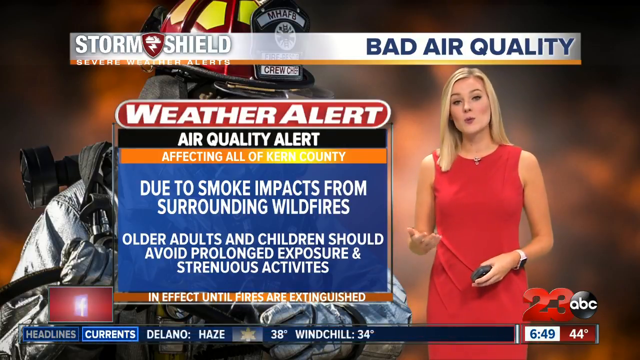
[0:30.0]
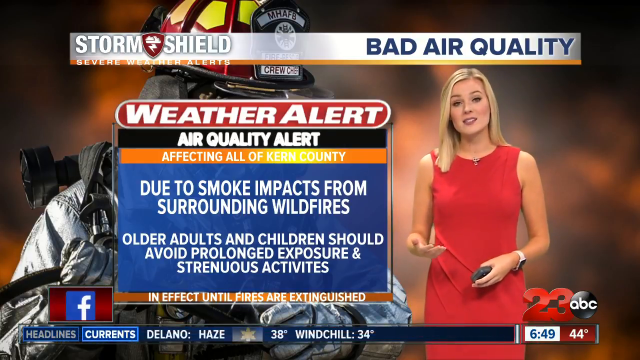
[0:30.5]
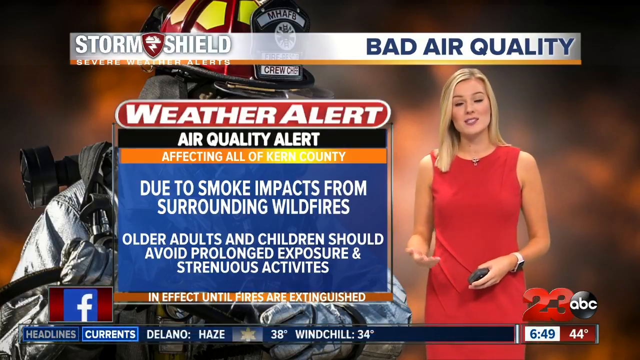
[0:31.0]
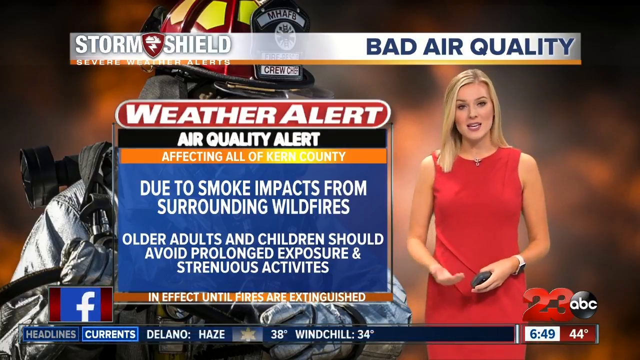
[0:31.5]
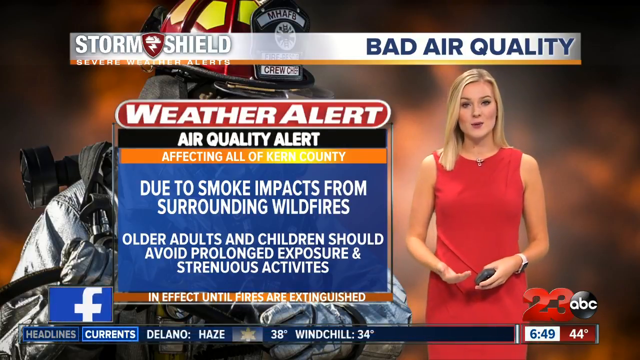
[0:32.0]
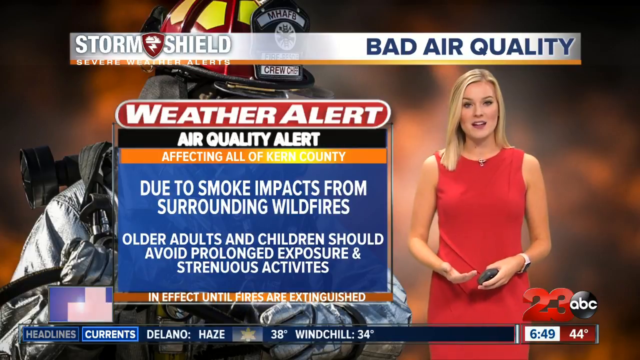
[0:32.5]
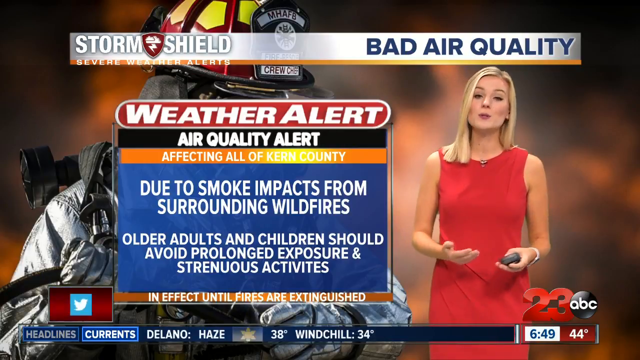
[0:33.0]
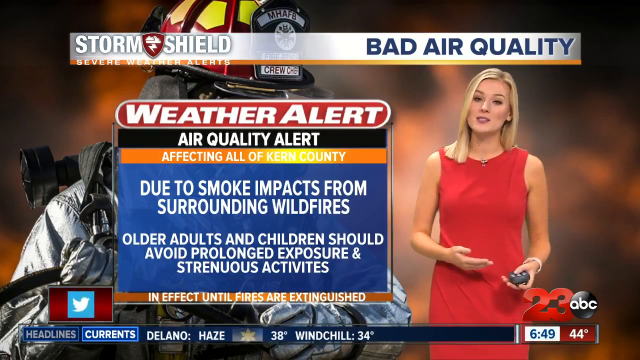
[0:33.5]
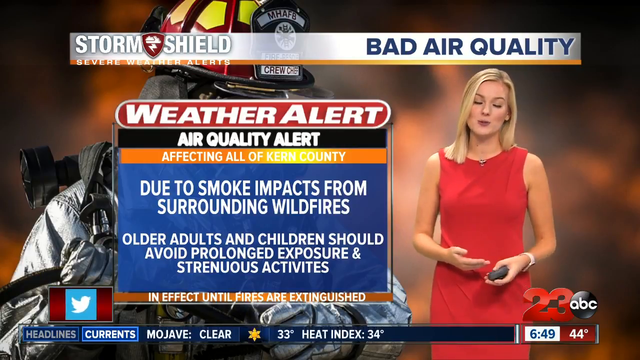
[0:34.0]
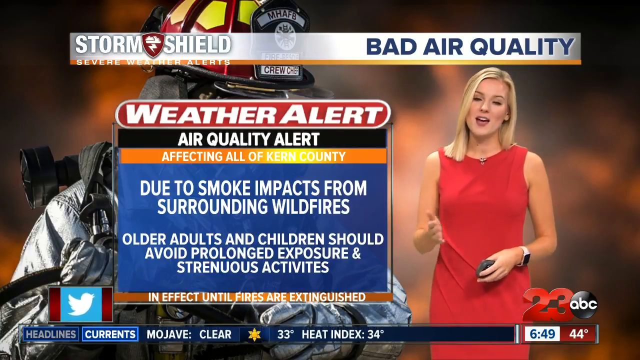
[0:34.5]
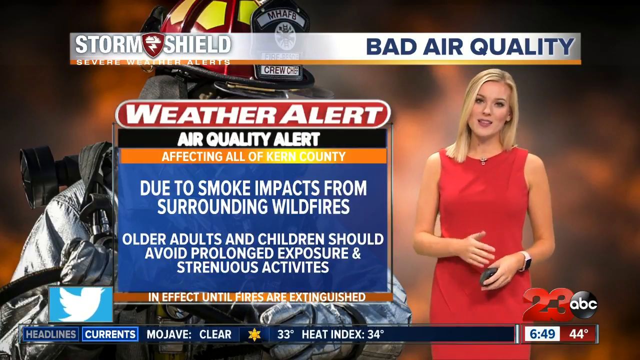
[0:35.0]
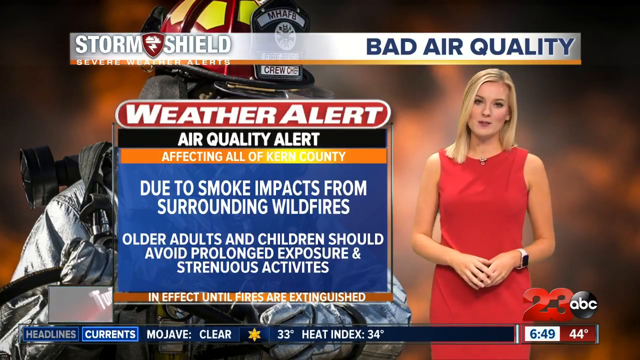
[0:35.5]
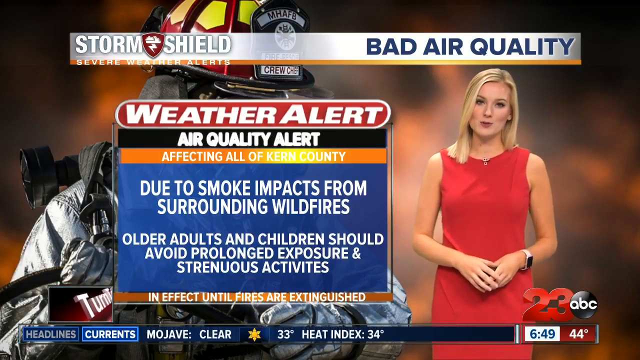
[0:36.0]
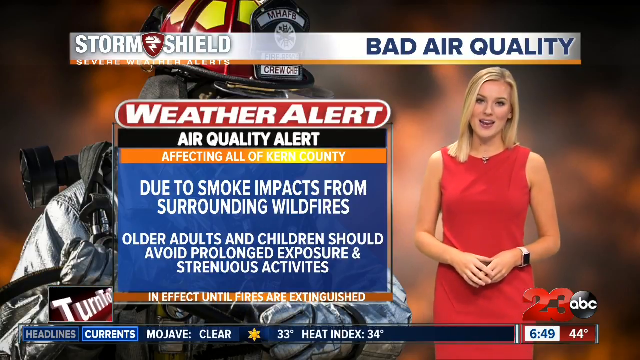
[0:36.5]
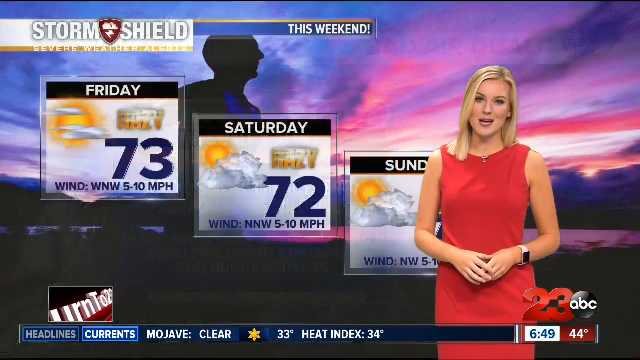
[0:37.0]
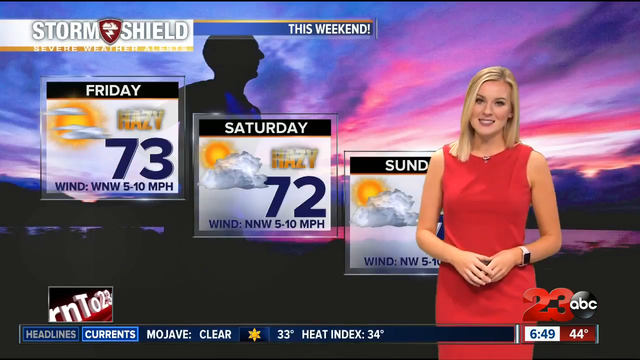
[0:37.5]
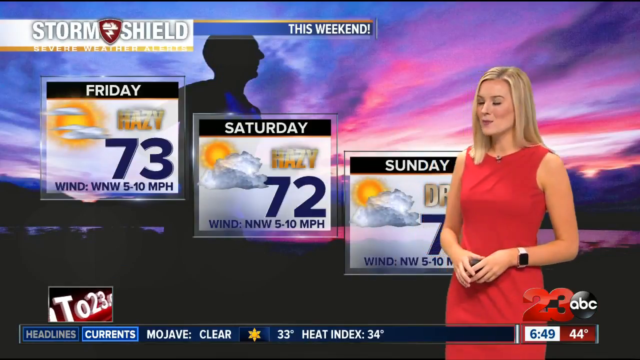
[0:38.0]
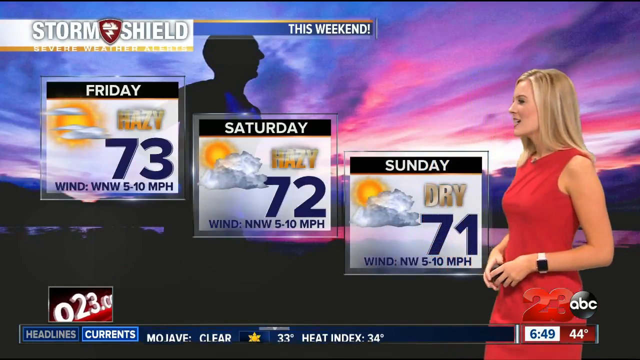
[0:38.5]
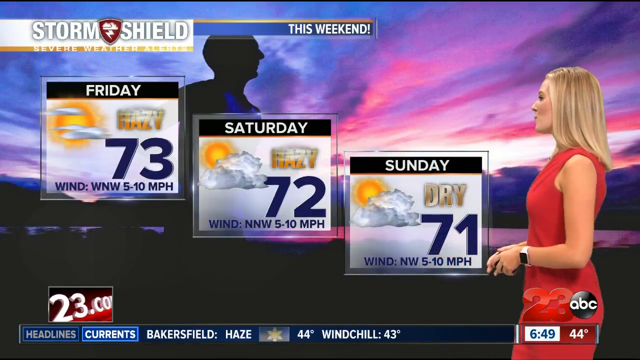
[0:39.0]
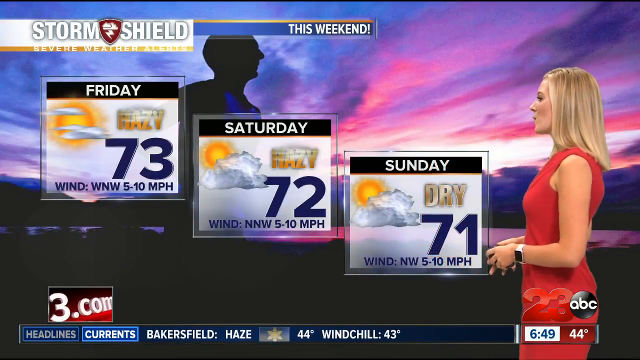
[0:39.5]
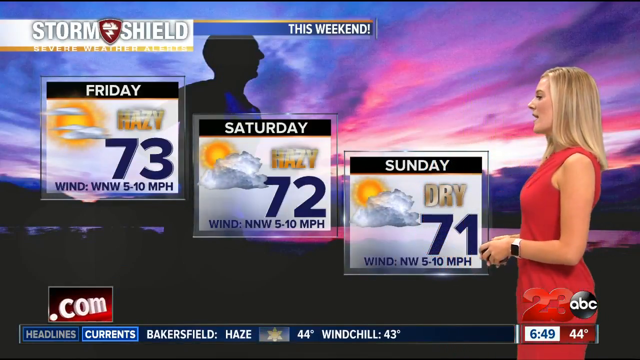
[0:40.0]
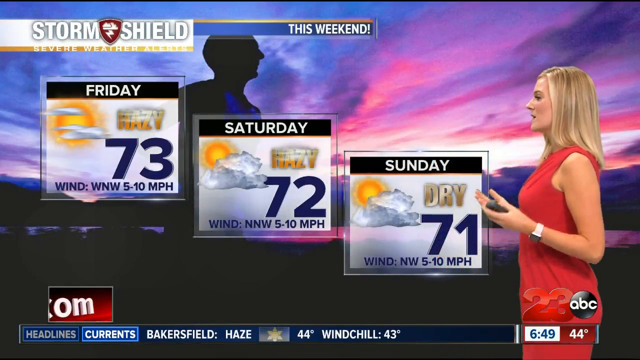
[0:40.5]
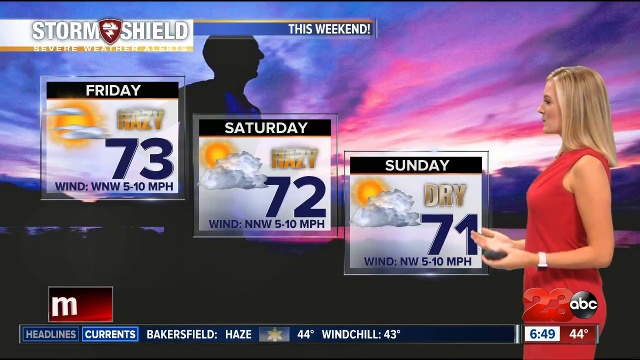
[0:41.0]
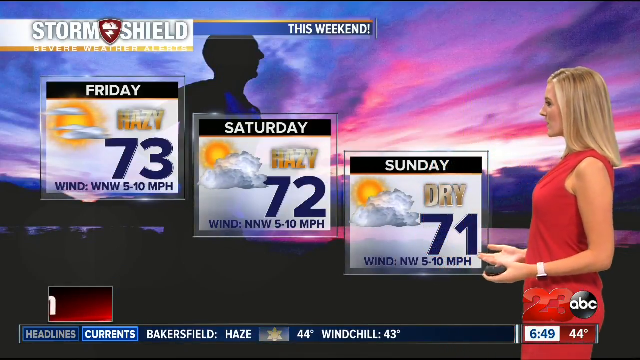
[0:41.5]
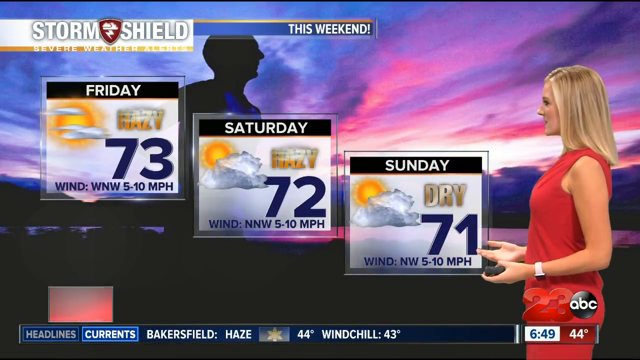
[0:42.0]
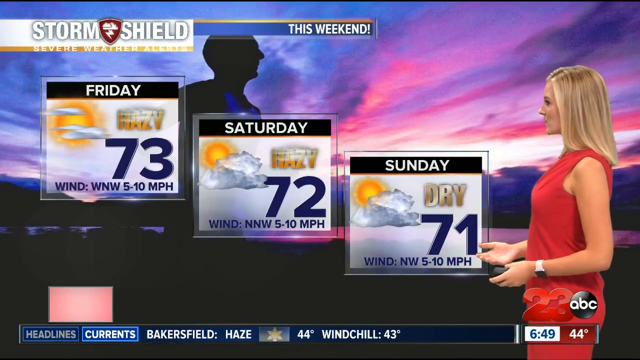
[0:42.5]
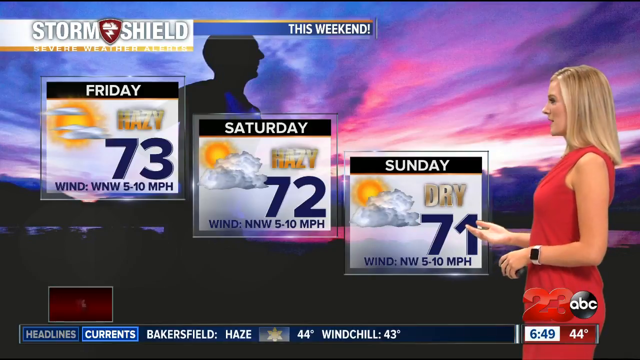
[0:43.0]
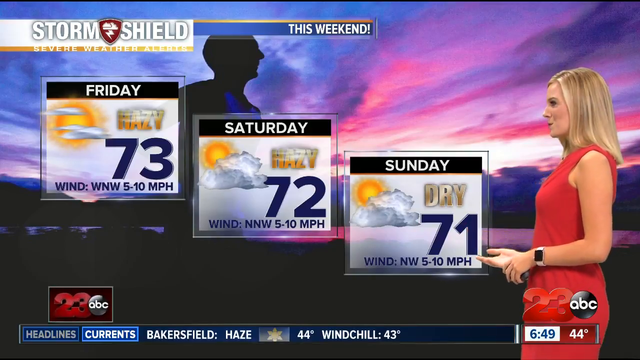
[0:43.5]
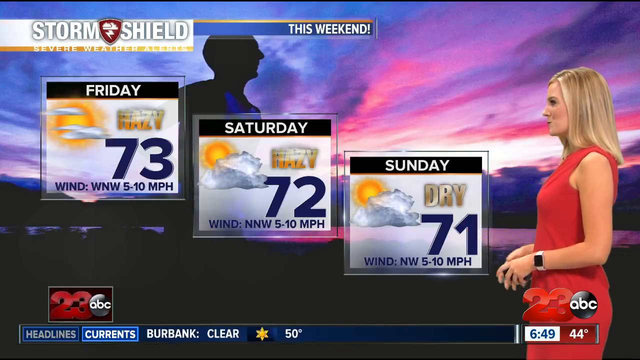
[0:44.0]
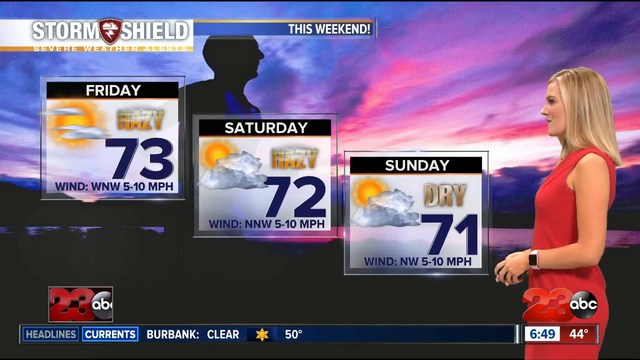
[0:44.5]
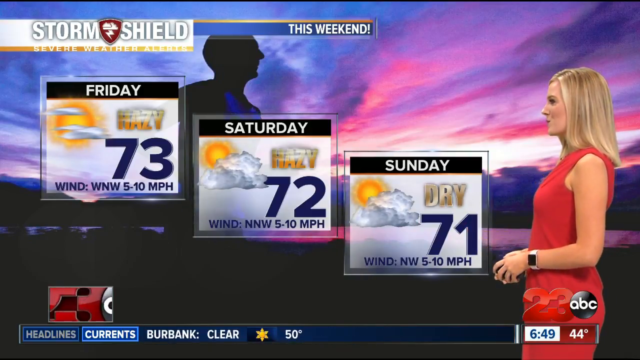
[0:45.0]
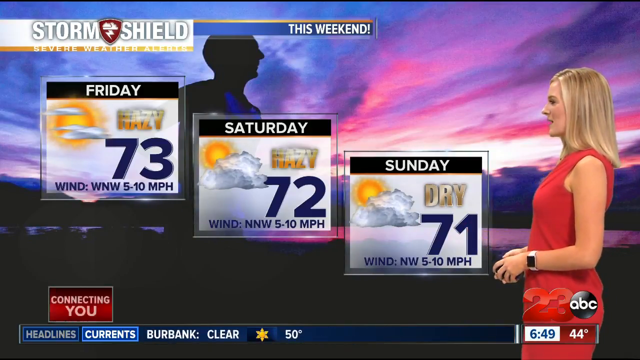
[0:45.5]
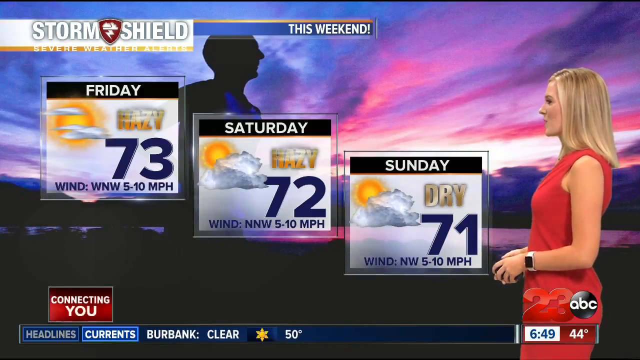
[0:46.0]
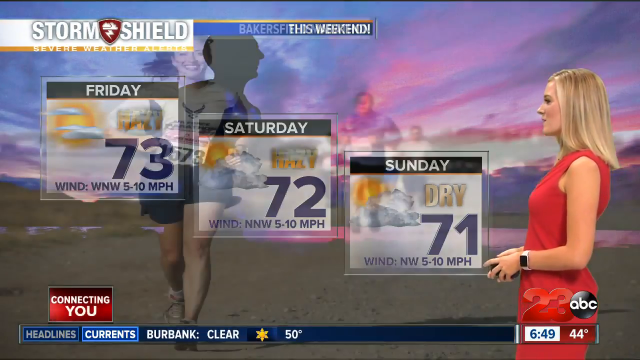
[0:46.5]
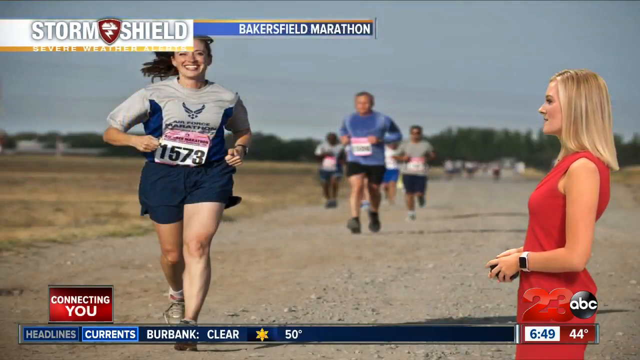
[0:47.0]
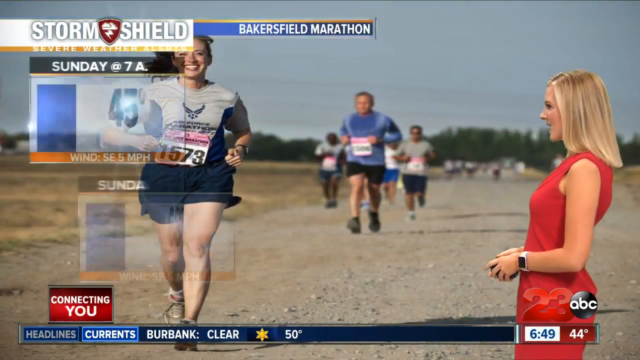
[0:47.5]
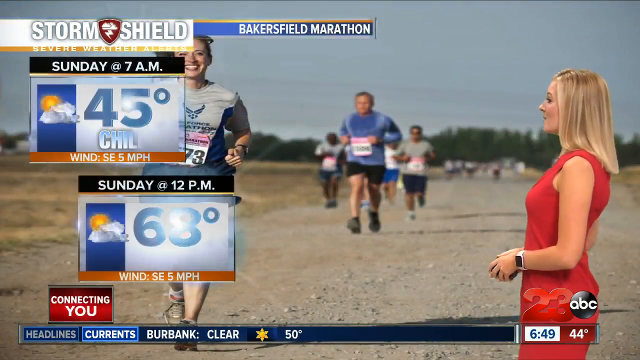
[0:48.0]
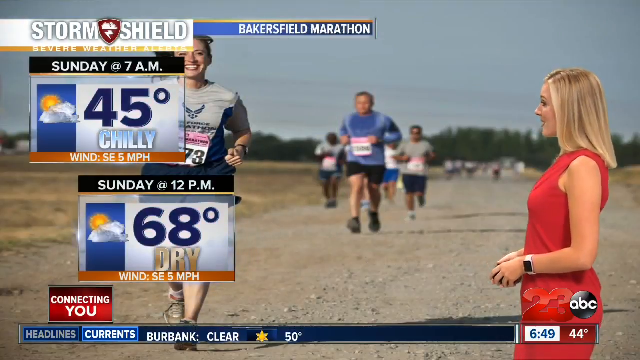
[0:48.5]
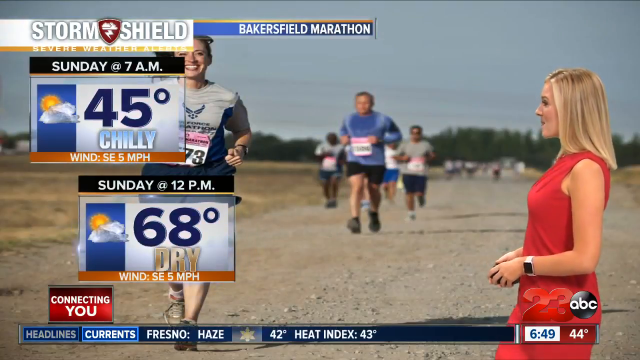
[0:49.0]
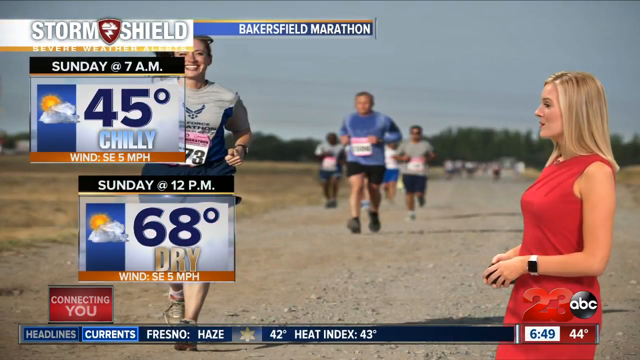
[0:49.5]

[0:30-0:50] The weather alert graphic continues as the blonde woman in the red dress, holding a remote and wearing the Apple Watch, keeps speaking and gesturing. She turns to the right, and the background image swiftly changes to the silhouette of a man against a brightly colored sunset. Three boxes on the screen represent Friday, Saturday and Sunday, each with its own weather report: Friday shows 73 degrees, Saturday 72 degrees and Sunday 71 degrees. The image fades to a group of runners in the background, and the three temperature boxes move to the side and focus on the temperatures for Sunday. The news anchor continues to gesture while speaking, giving the weather report for Sunday in particular, which coincides with a running event.